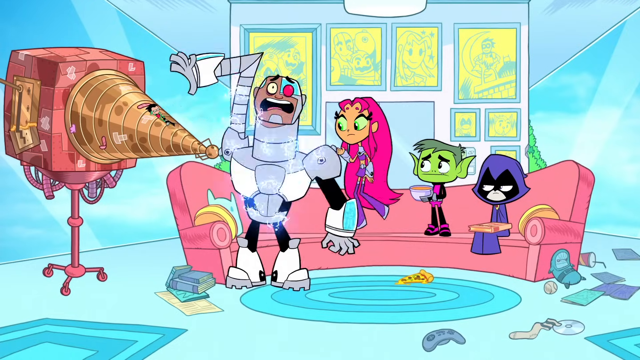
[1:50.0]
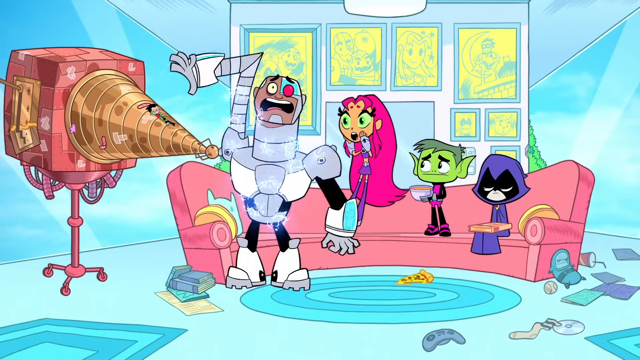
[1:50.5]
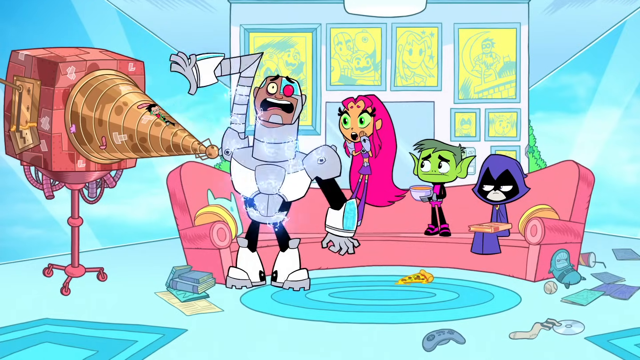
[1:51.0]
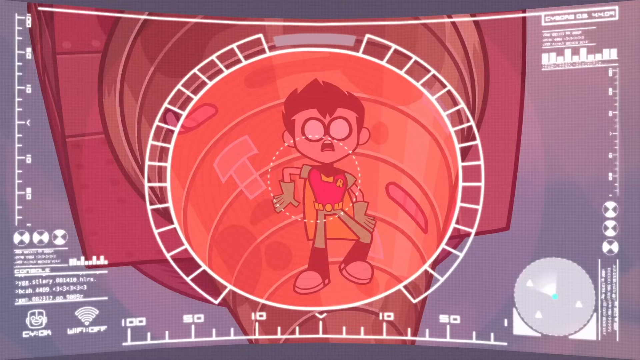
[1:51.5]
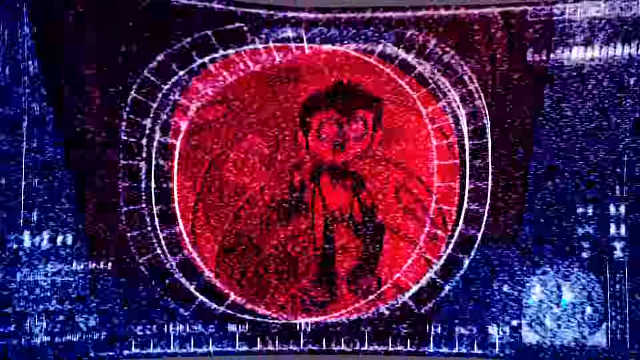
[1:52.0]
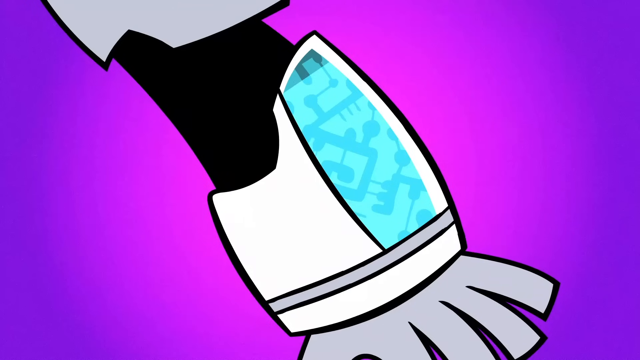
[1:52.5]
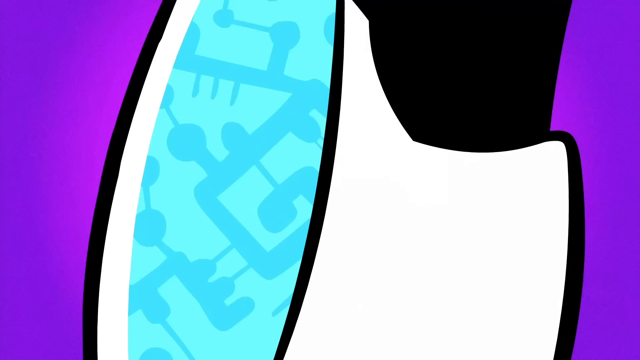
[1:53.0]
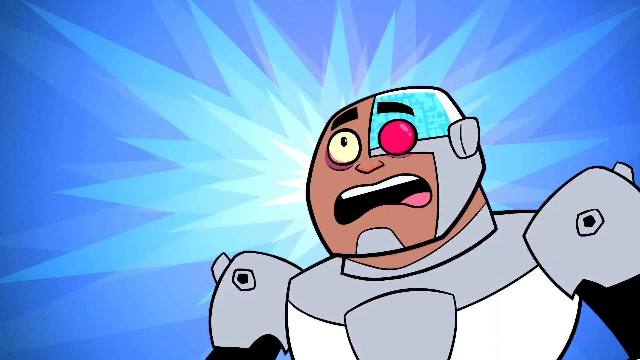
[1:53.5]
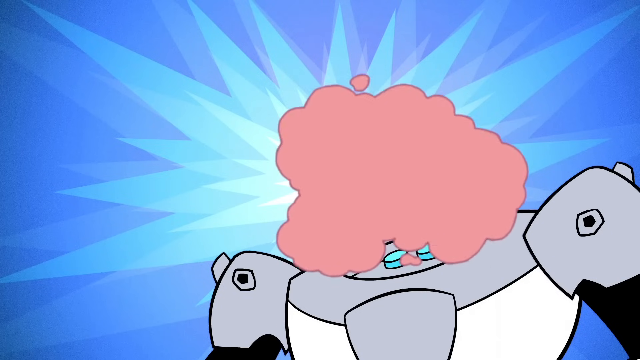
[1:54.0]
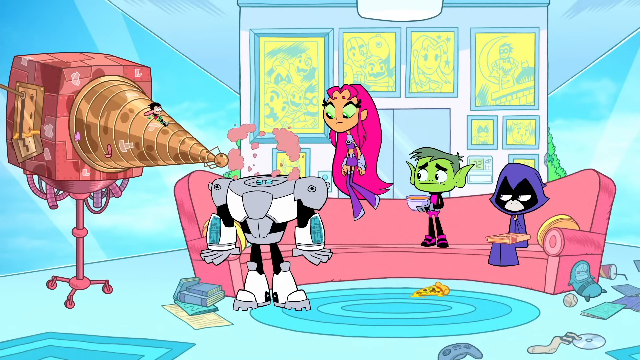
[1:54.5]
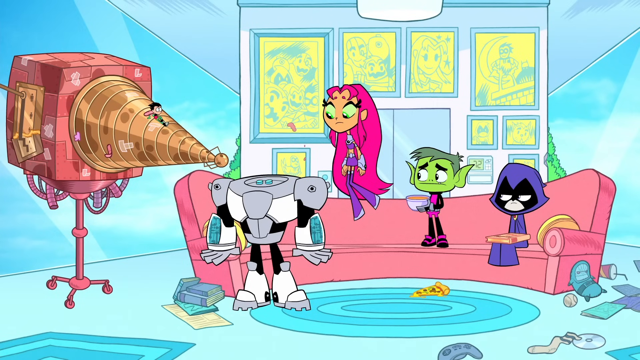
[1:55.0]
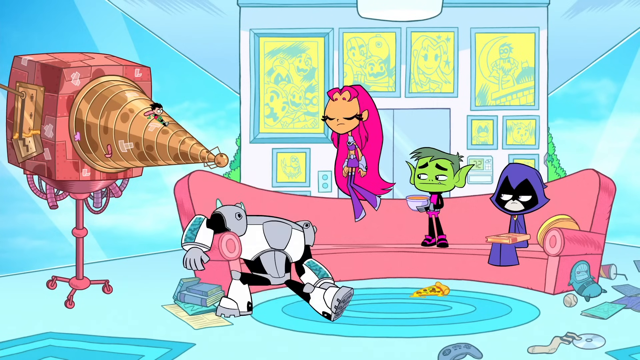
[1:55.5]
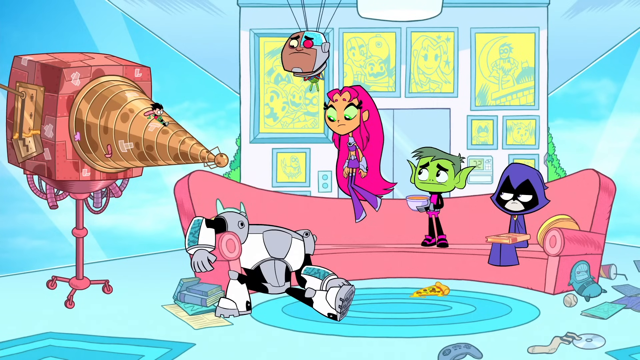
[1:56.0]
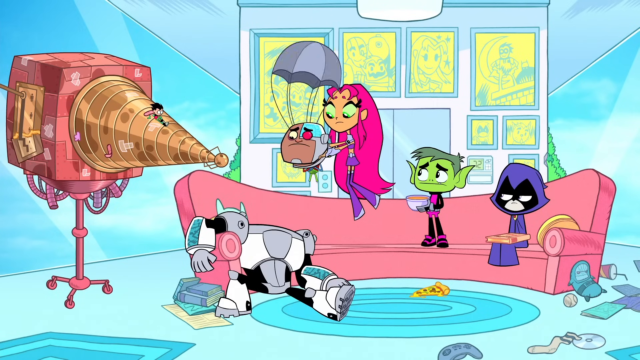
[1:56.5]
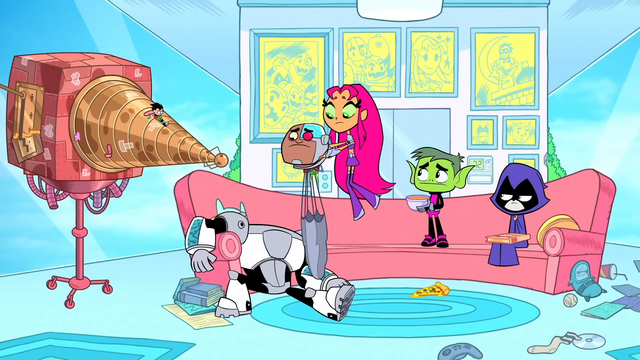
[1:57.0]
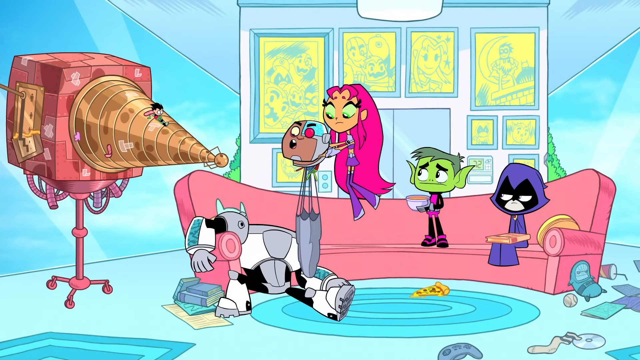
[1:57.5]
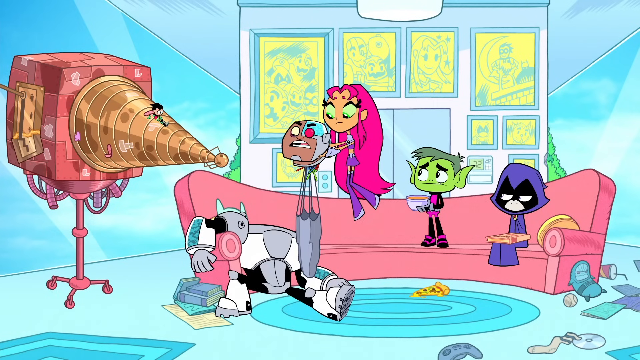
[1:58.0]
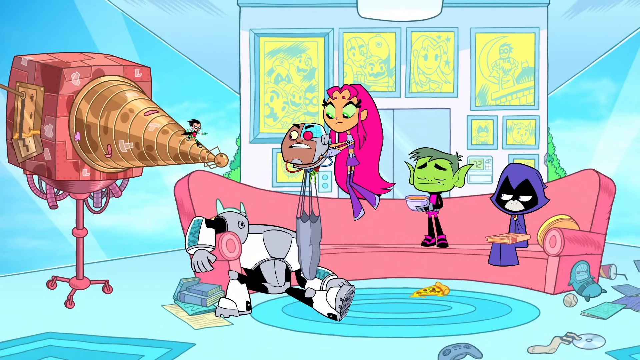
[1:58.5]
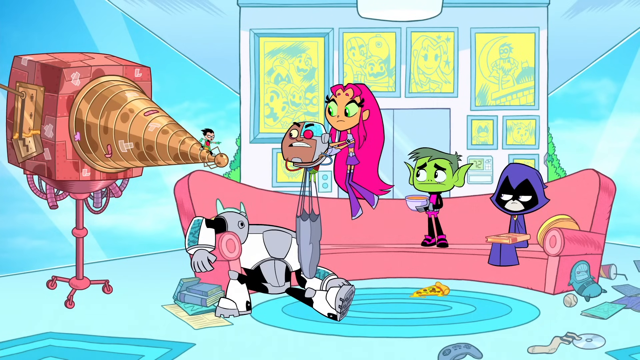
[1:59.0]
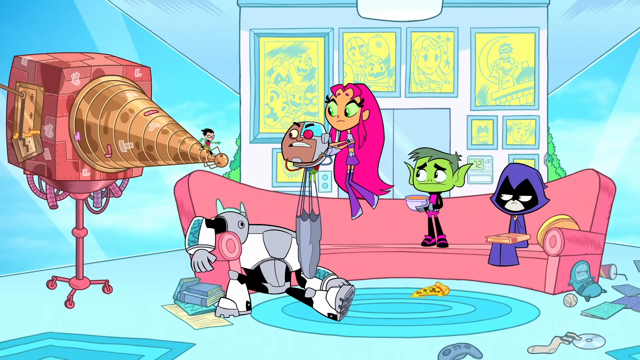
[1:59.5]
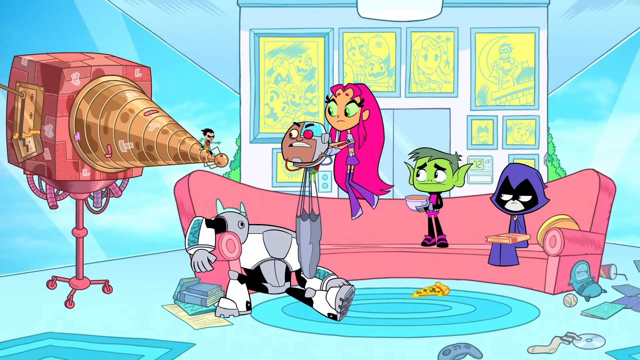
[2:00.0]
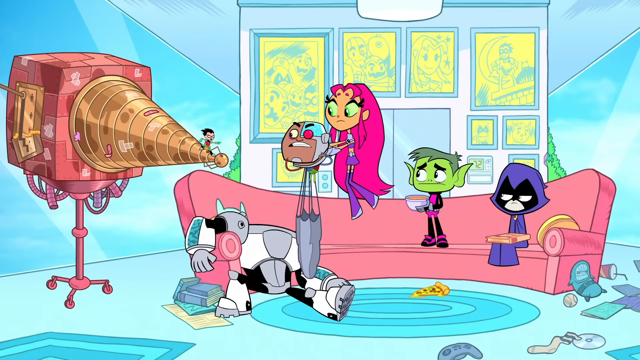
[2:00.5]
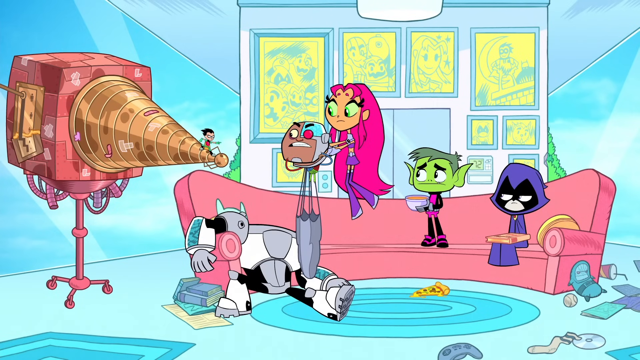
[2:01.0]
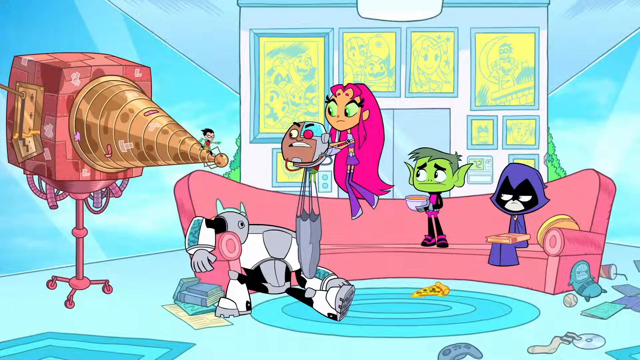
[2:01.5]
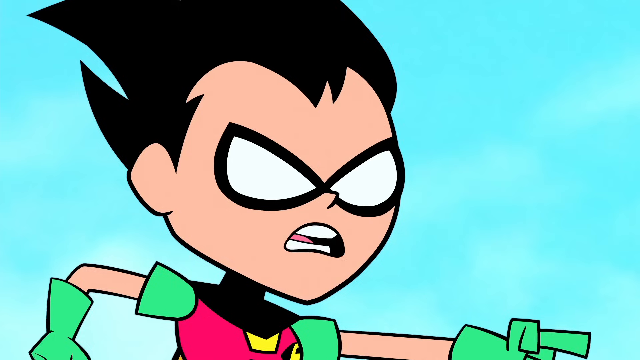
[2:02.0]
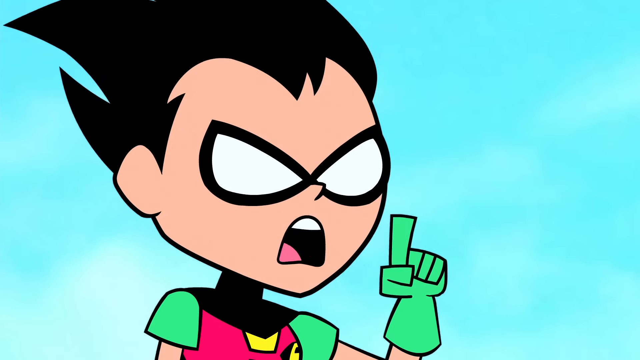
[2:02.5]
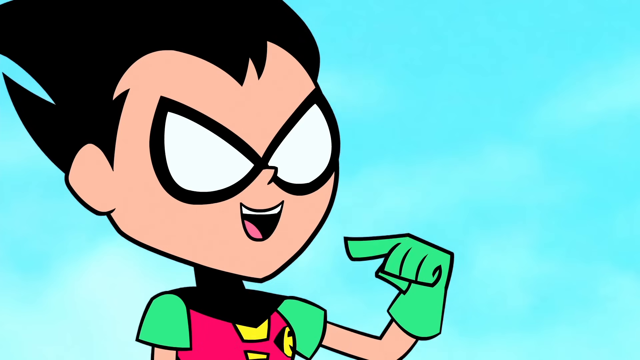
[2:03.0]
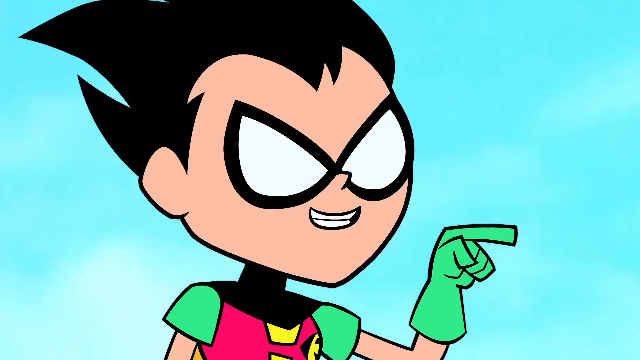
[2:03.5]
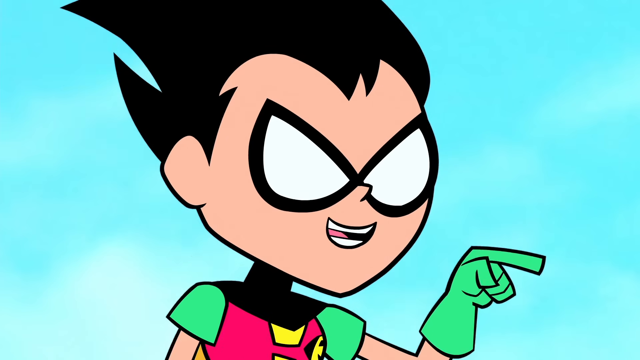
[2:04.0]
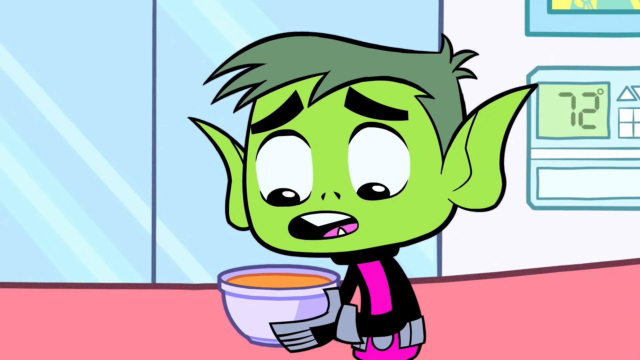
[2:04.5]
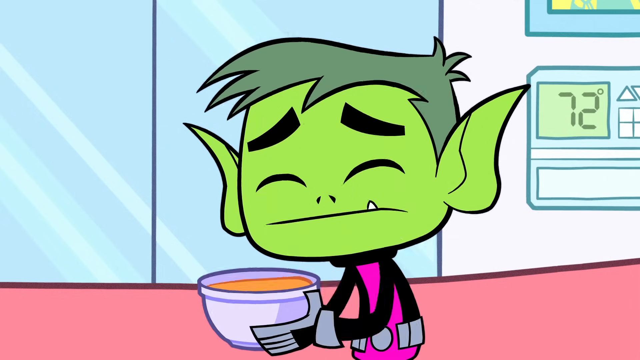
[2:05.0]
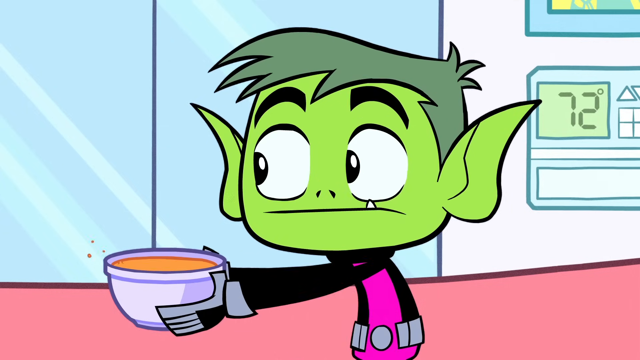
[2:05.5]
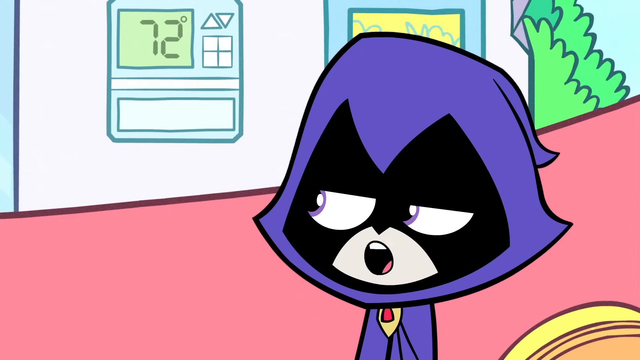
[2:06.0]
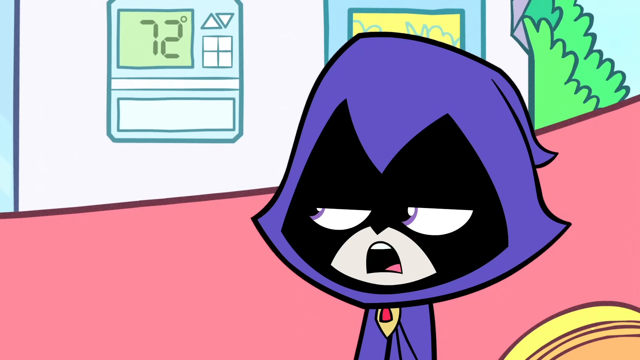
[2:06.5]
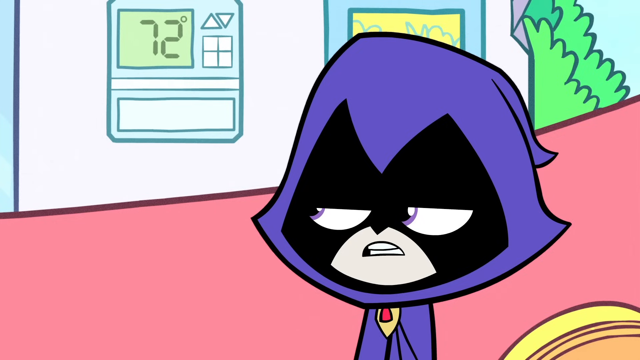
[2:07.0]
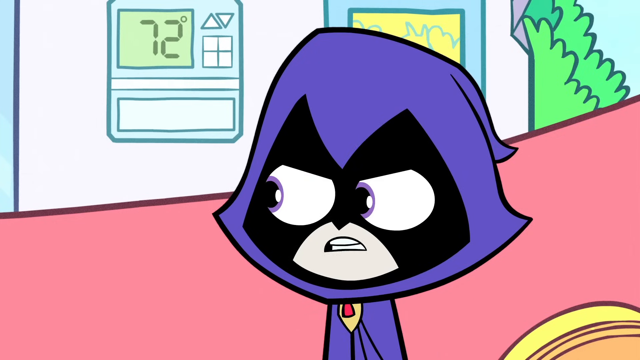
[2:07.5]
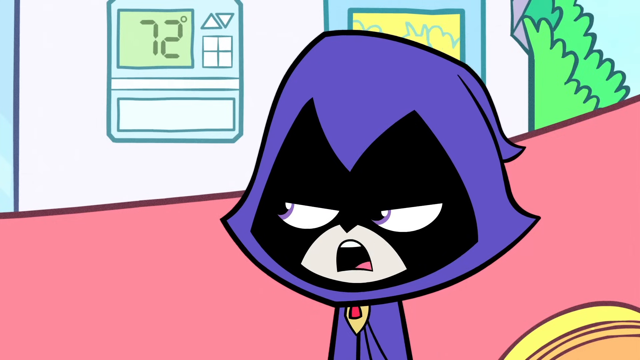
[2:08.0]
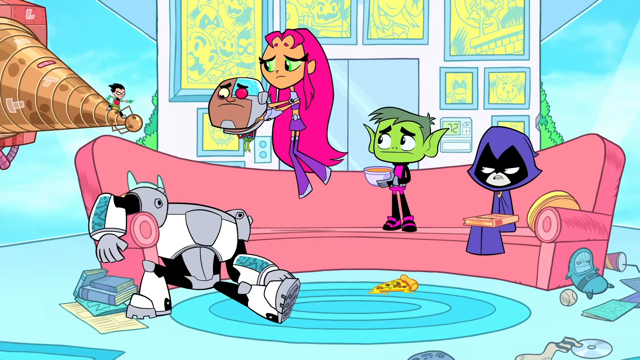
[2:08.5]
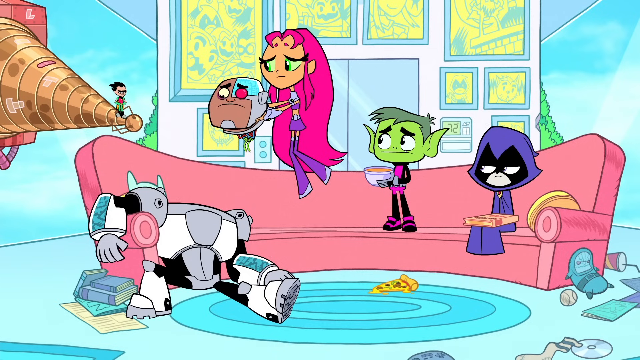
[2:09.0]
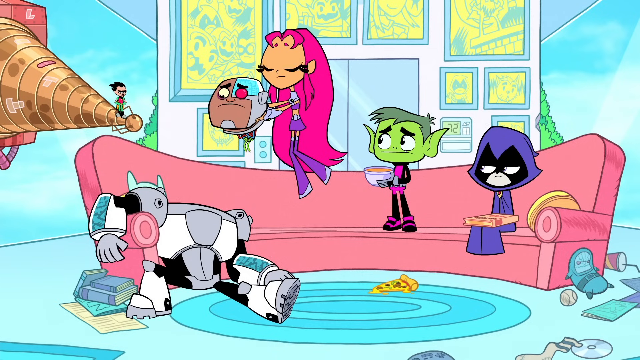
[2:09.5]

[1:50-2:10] All of the Teen Titans are shown with the gold and red machine pointed at them, specifically at Cyborg. It looks like Cyborg's head blasts off from his body and floats down with a parachute, perhaps in reaction to the machine. The view zooms in close on Robin as he talks and points. Beast Boy then holds up his bowl of soup. Raven speaks, looking displeased. Starfire holds on to Cyborg's head. They are all on the pink couch: Raven sitting down, Beast Boy standing on the couch, and Starfire floating just above it. Robin is still standing on top of the machine or gadget on the left side of the screen. On the wall is a cartoon image of a thermostat set to 72 degrees.